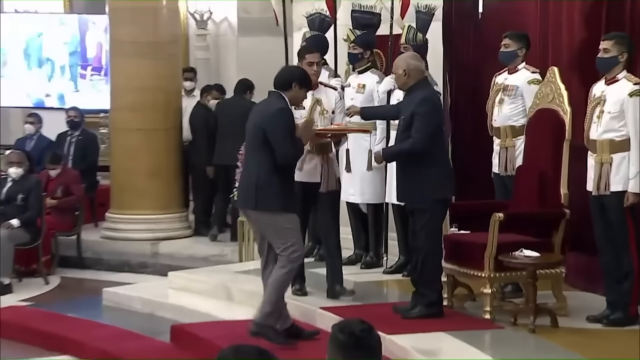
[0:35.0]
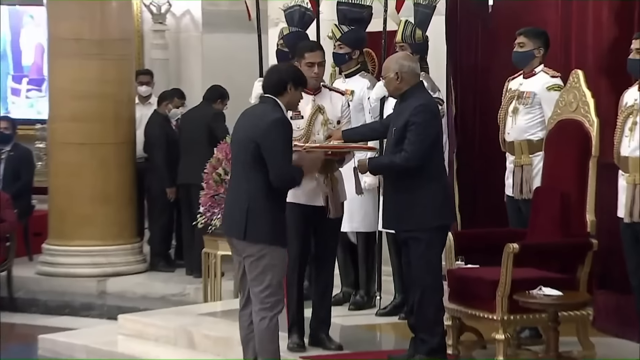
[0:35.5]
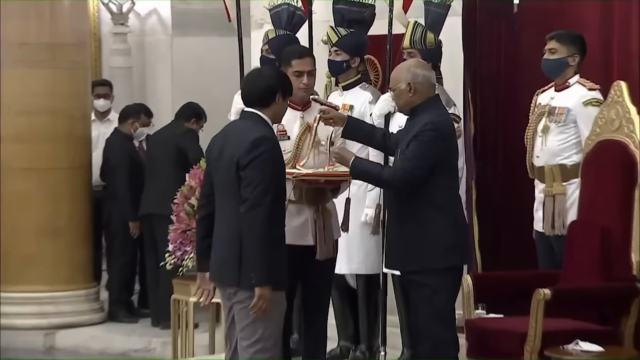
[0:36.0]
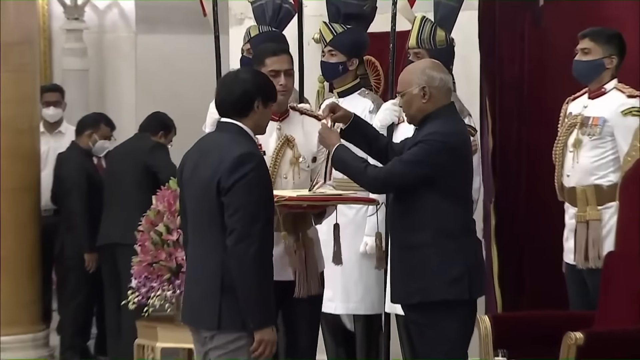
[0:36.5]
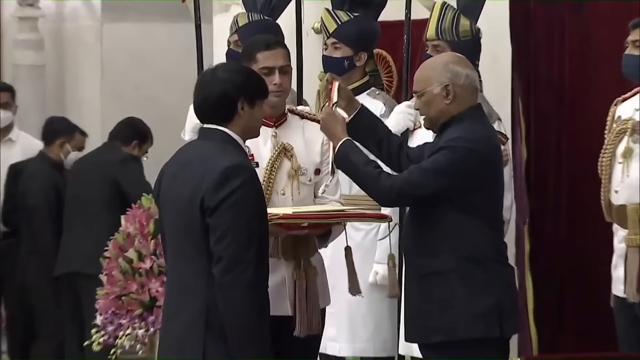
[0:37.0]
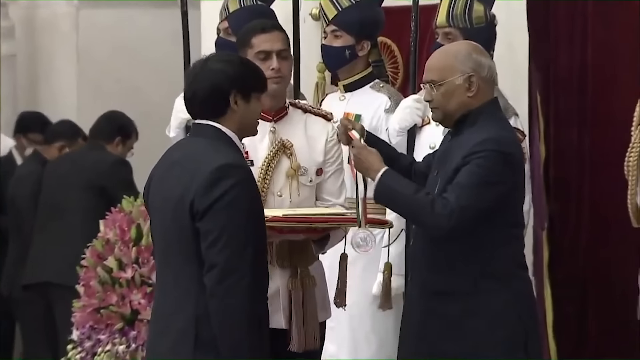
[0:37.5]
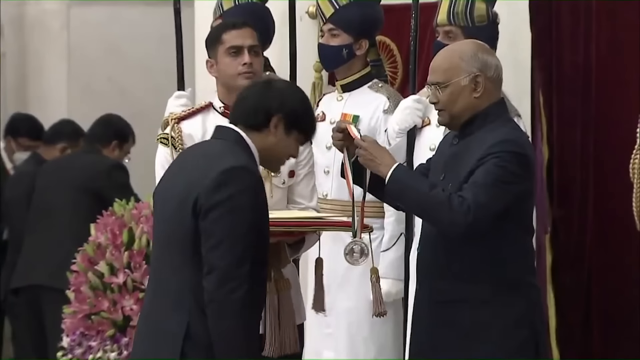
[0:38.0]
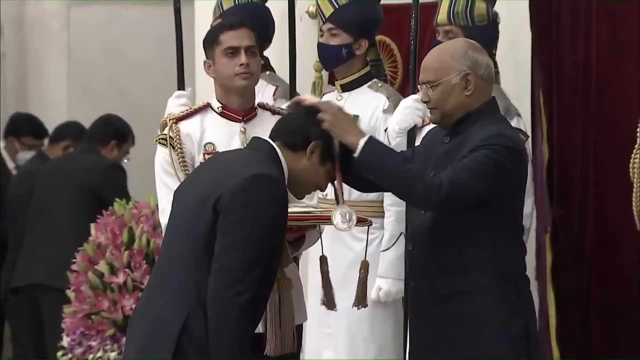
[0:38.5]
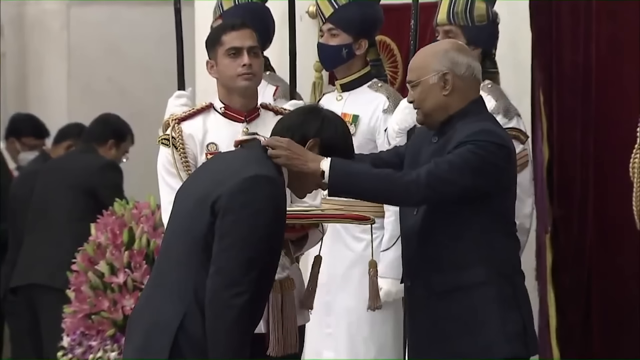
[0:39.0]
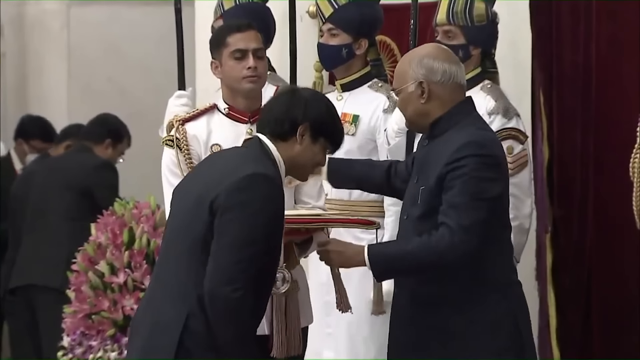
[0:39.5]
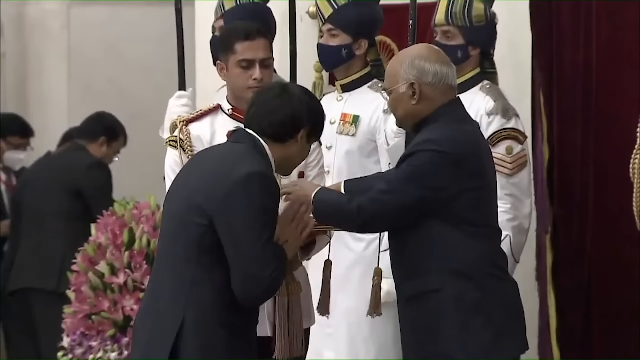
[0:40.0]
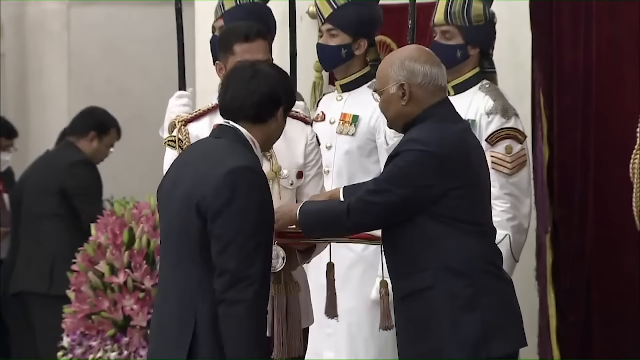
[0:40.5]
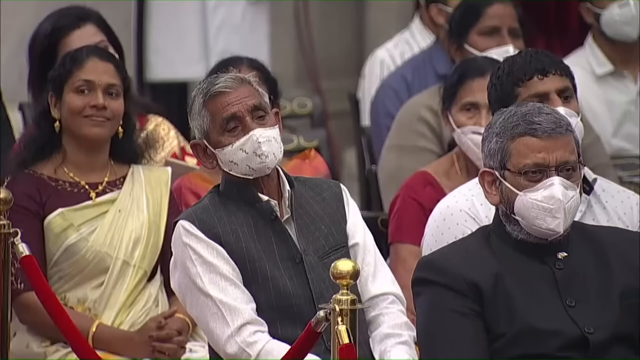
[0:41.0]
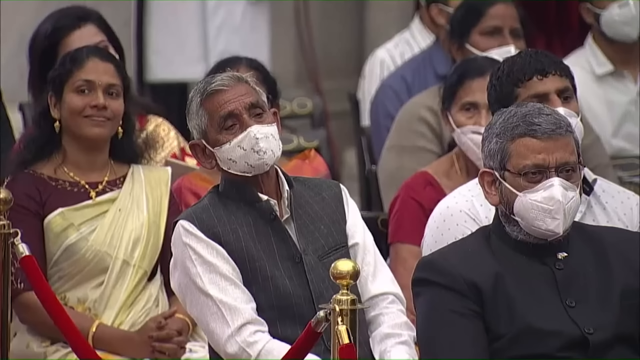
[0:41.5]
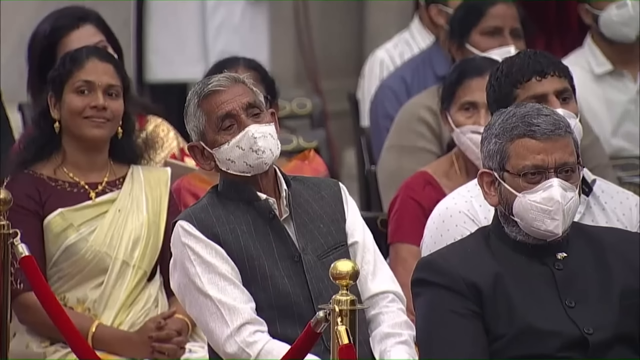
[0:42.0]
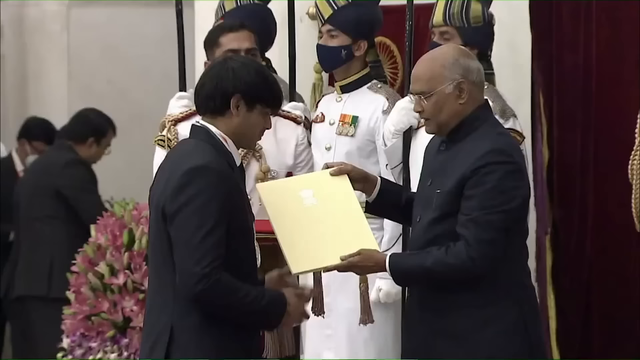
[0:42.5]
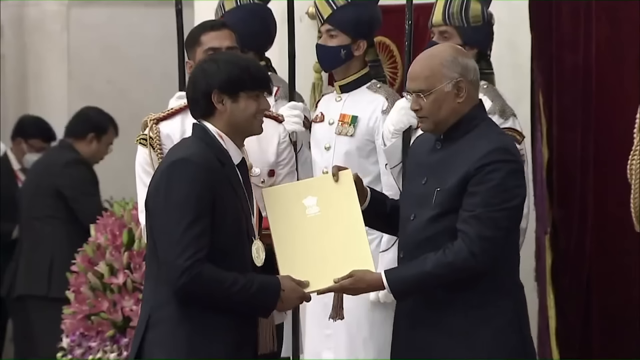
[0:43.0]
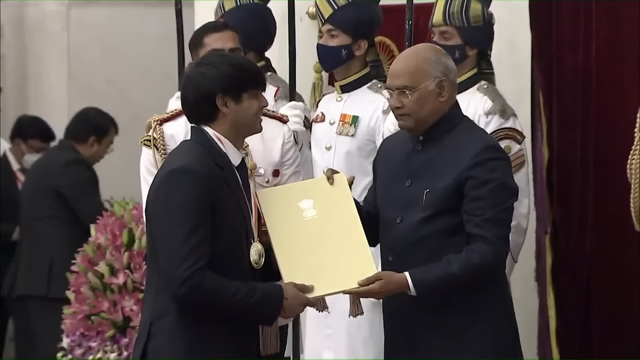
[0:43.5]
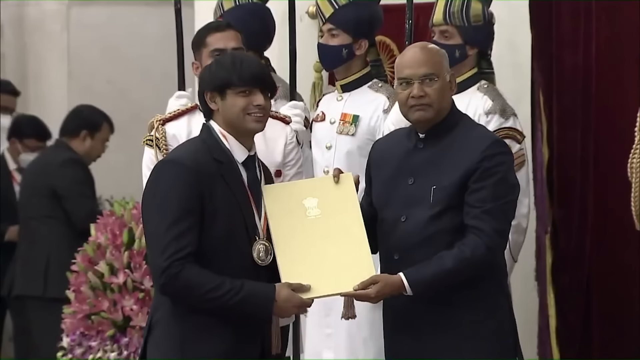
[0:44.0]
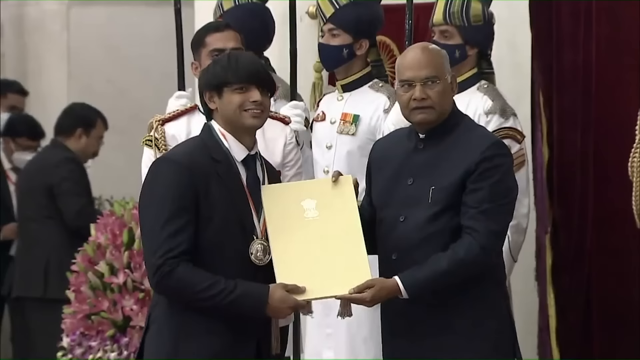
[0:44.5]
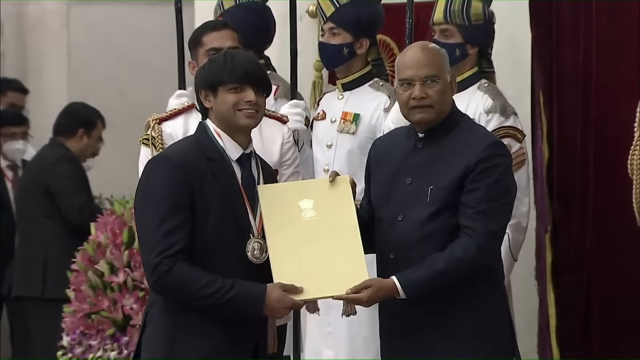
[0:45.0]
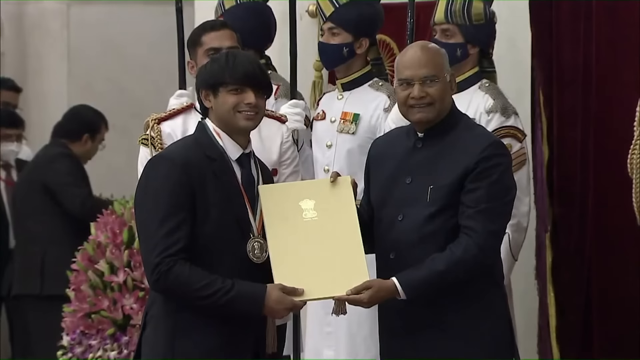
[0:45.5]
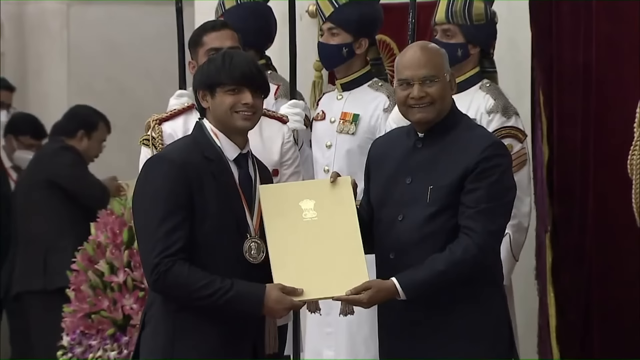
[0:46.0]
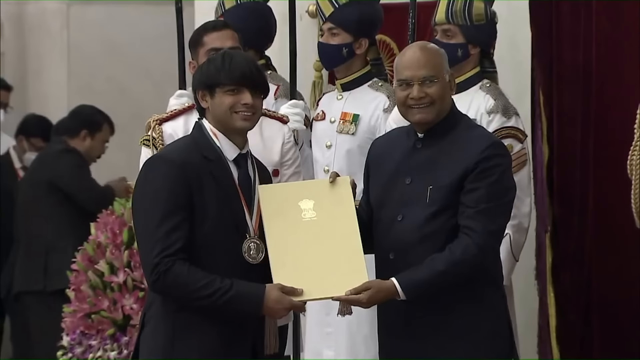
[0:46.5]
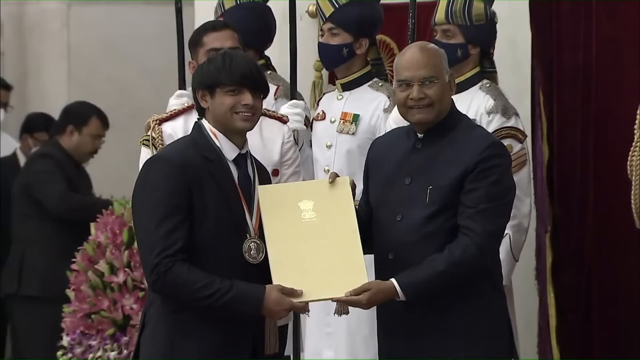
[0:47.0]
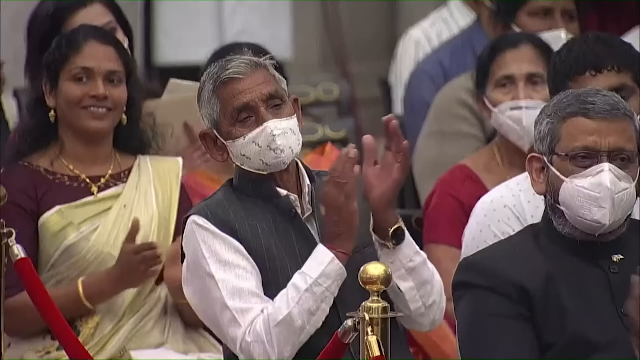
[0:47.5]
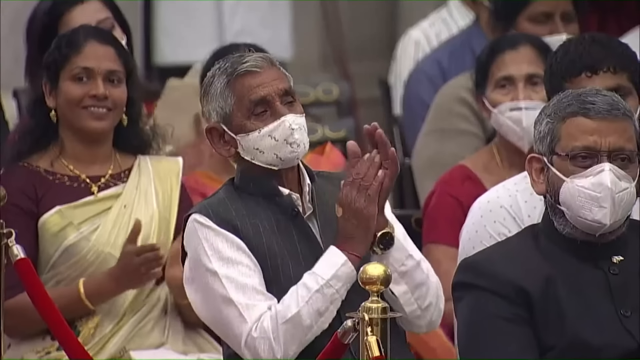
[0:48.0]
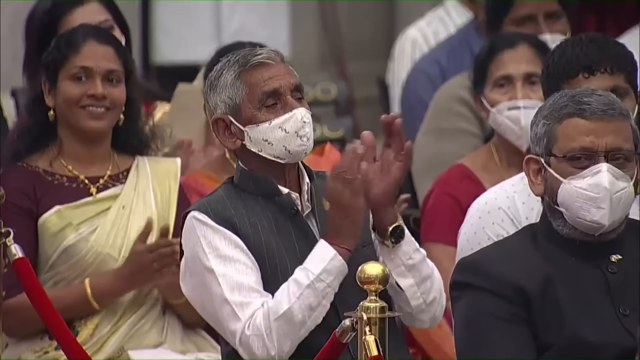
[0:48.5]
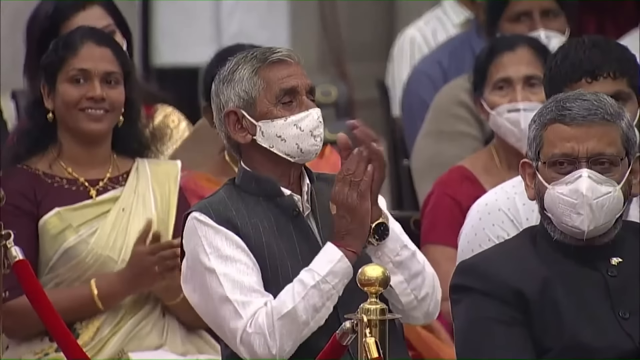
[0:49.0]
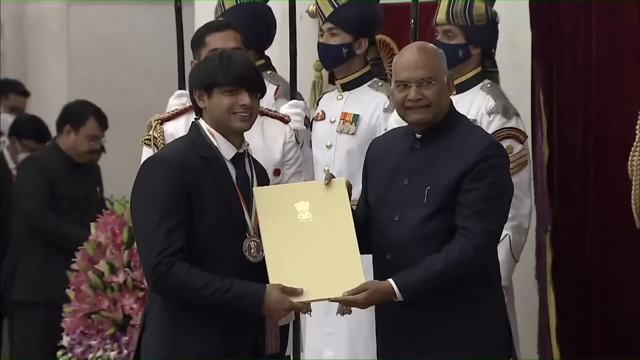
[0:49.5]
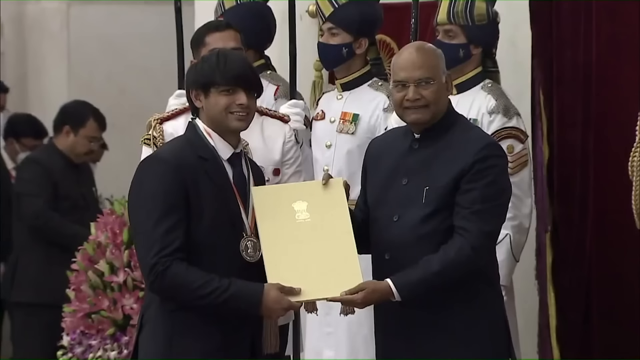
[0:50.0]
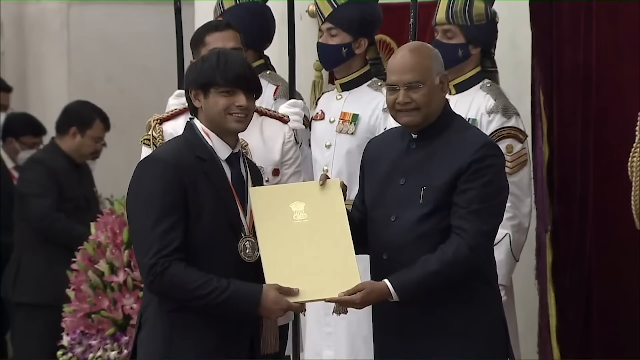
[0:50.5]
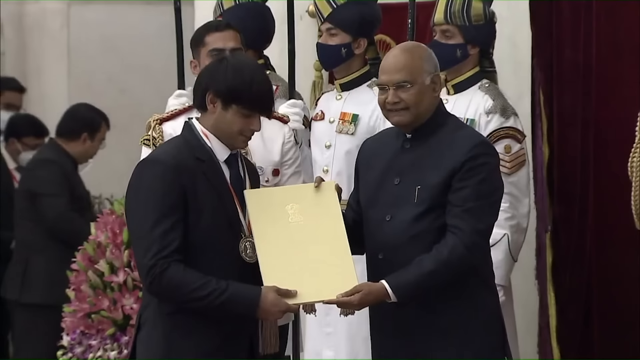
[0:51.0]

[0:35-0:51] The young man, Neeraj Chopra, walks up to President Kovind, and an official wearing a white military uniform comes up carrying a pillow. The president takes a silver medal from the pillow and places it over Neeraj's head, then pulls what looks like a document from the pillow. The video cuts to the audience, where a few people face forward, mostly wearing white face masks. The president presents Neeraj with what looks like a light yellow folder. Both of them hold it and face cameras as flashes go off, and both smile. The video cuts back to the audience applauding.